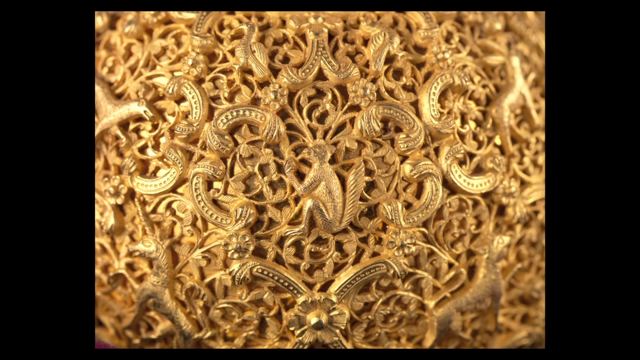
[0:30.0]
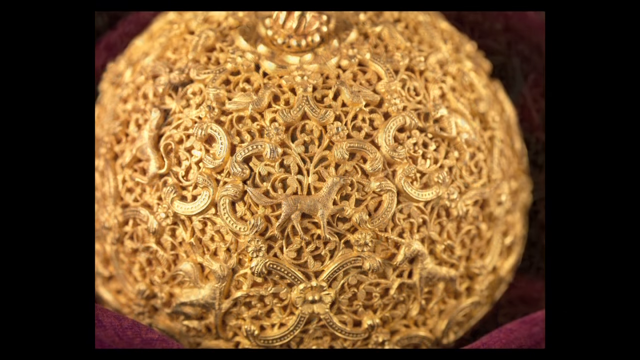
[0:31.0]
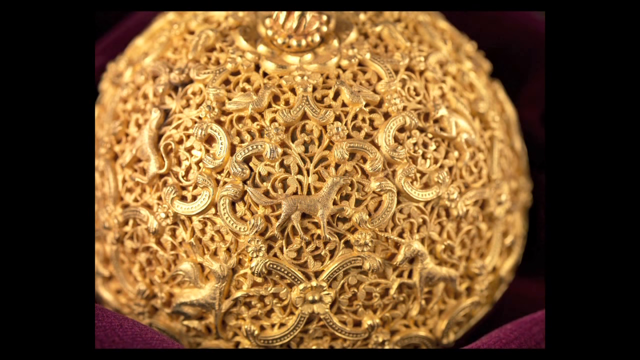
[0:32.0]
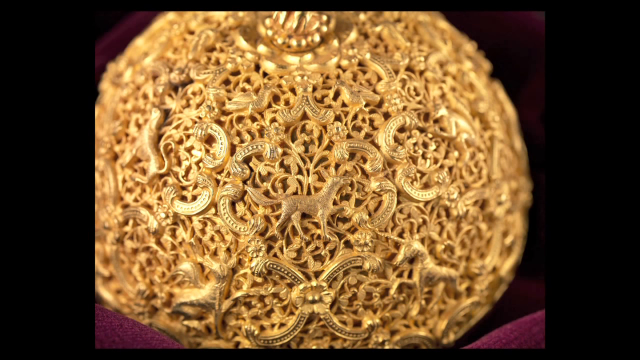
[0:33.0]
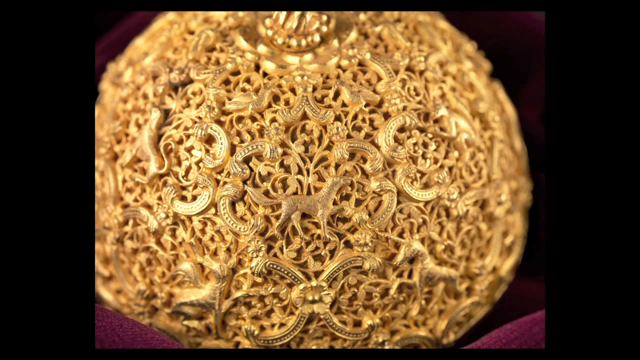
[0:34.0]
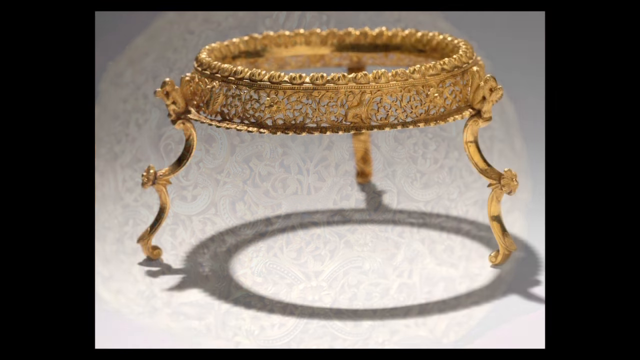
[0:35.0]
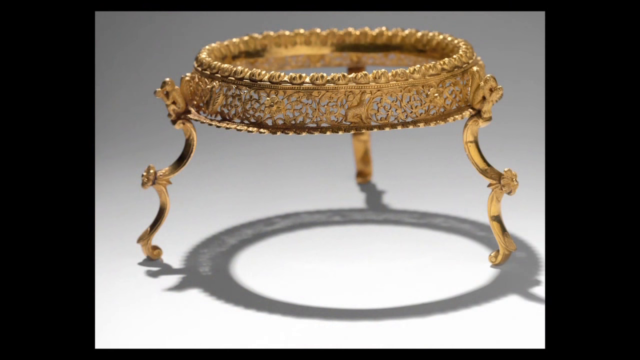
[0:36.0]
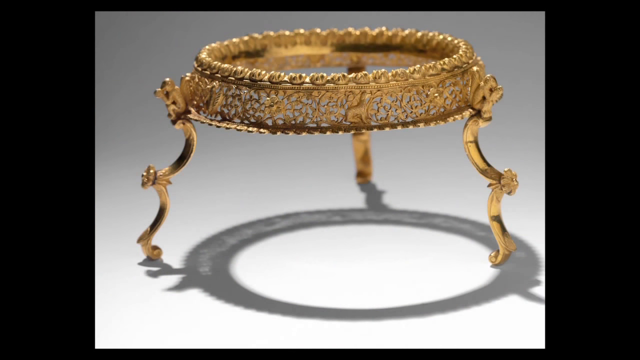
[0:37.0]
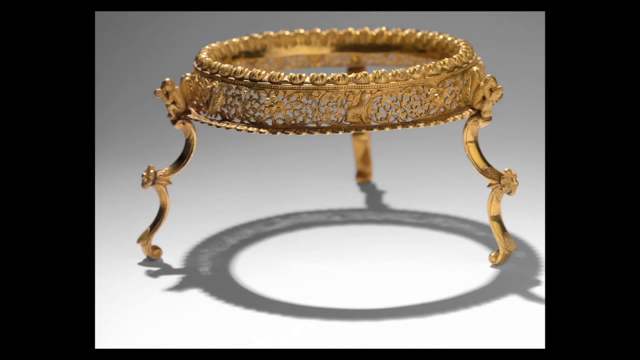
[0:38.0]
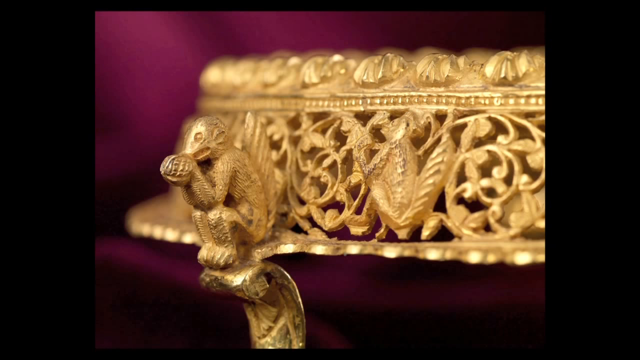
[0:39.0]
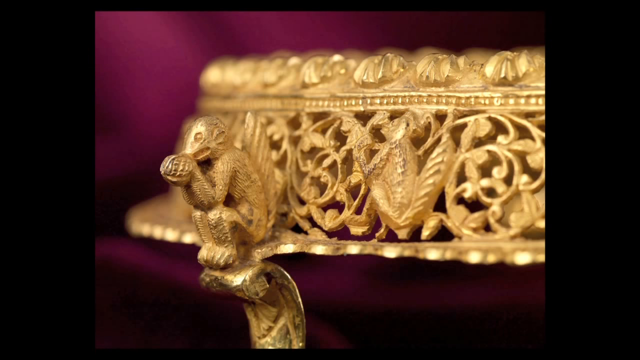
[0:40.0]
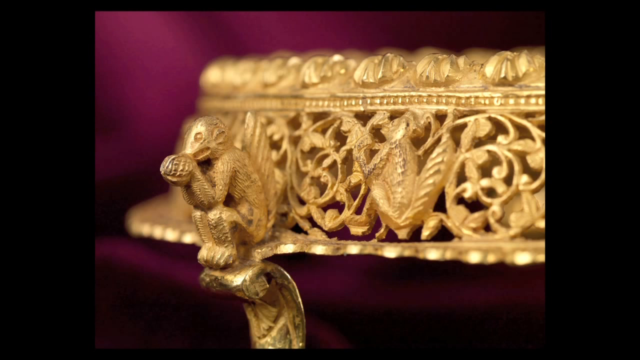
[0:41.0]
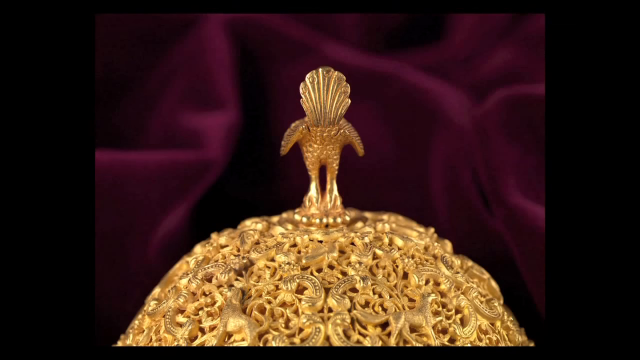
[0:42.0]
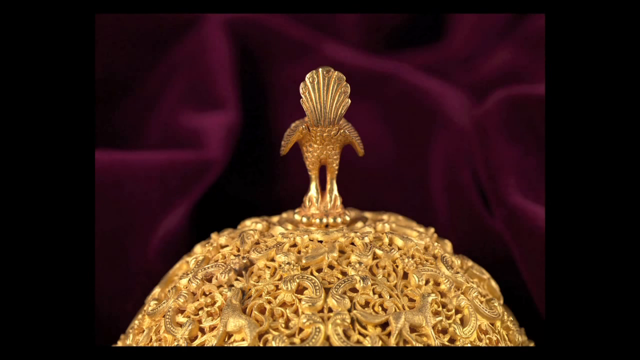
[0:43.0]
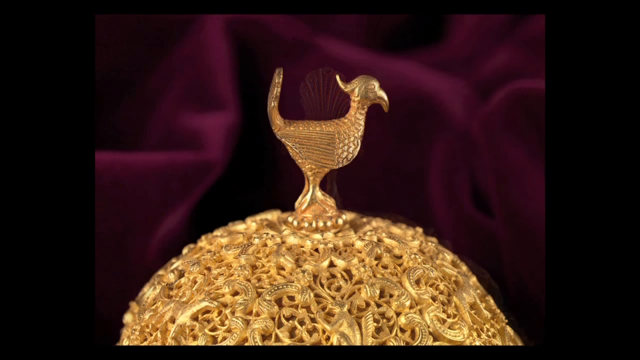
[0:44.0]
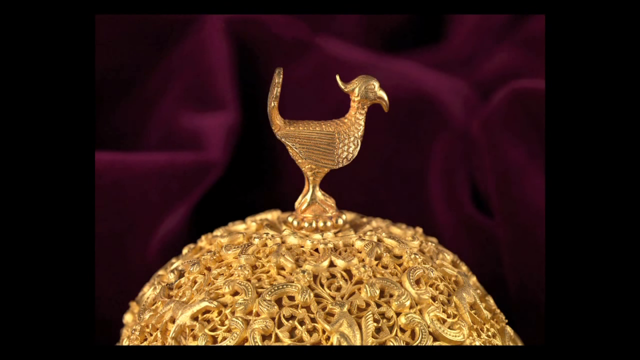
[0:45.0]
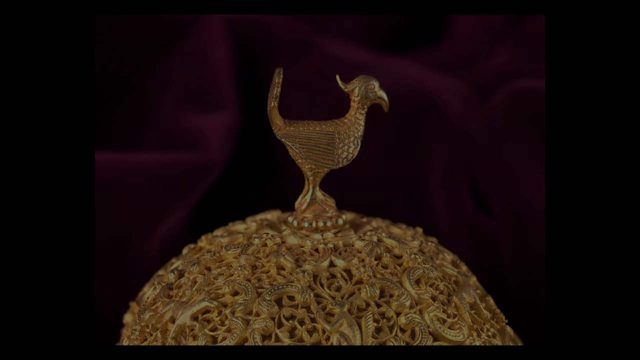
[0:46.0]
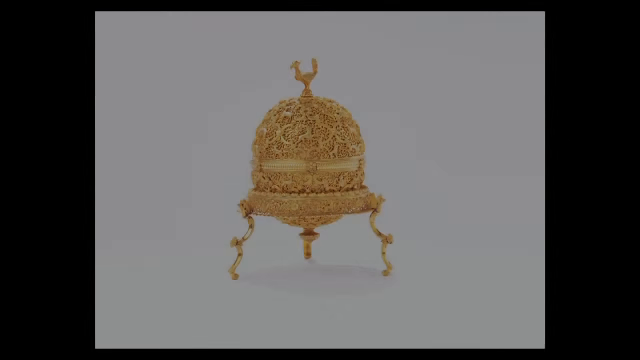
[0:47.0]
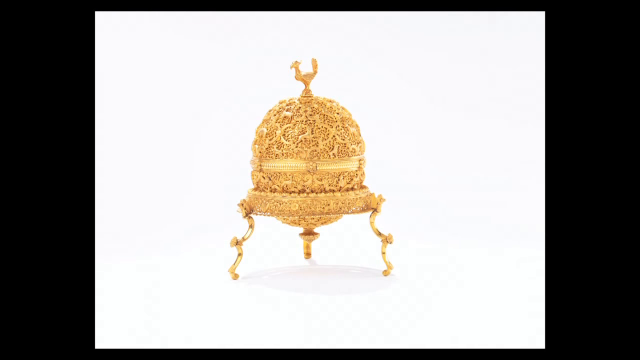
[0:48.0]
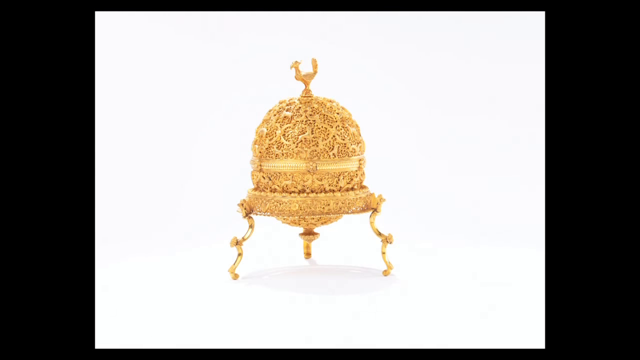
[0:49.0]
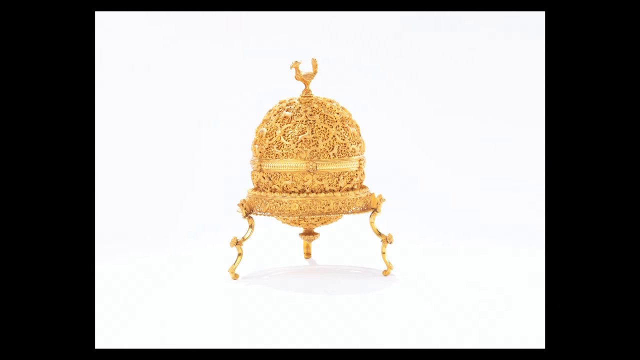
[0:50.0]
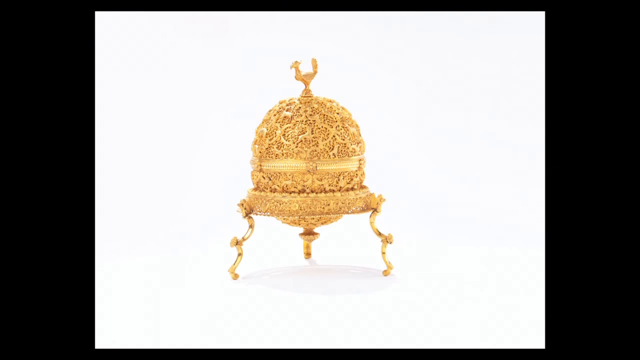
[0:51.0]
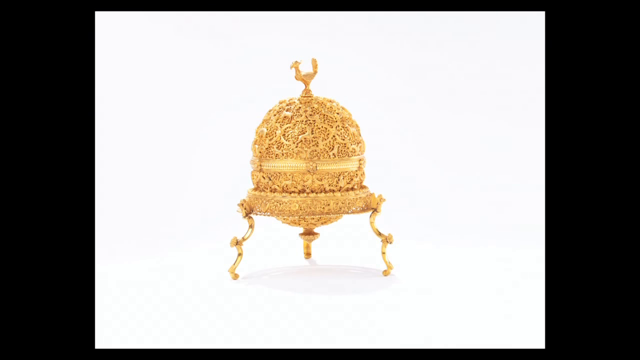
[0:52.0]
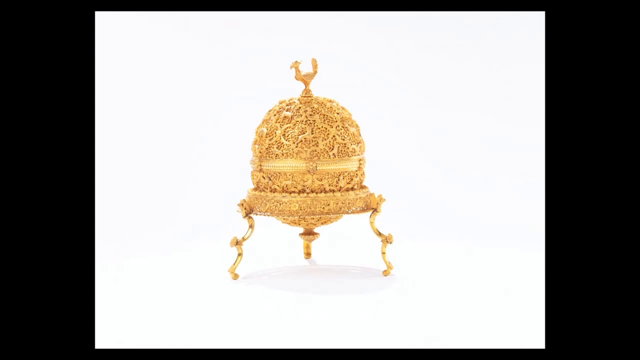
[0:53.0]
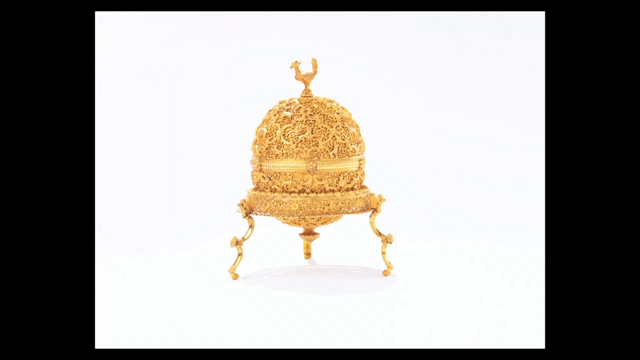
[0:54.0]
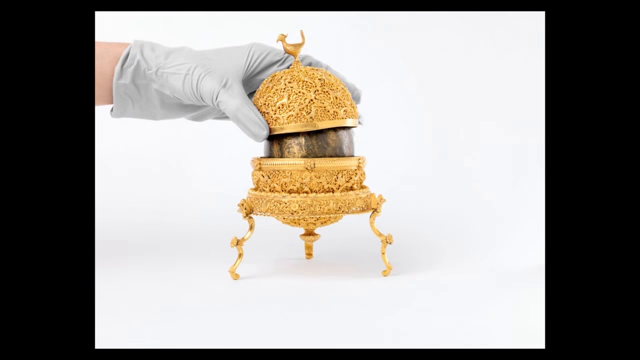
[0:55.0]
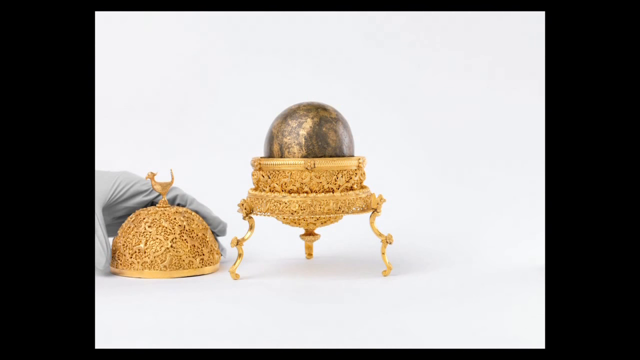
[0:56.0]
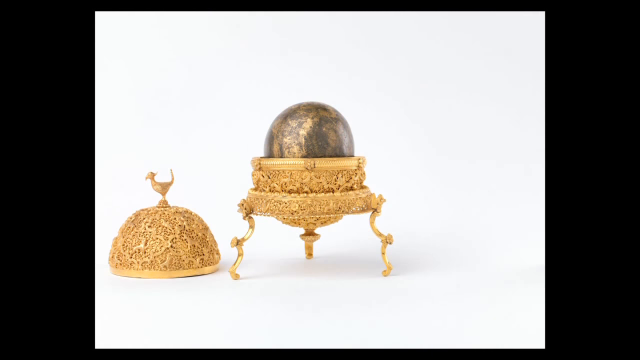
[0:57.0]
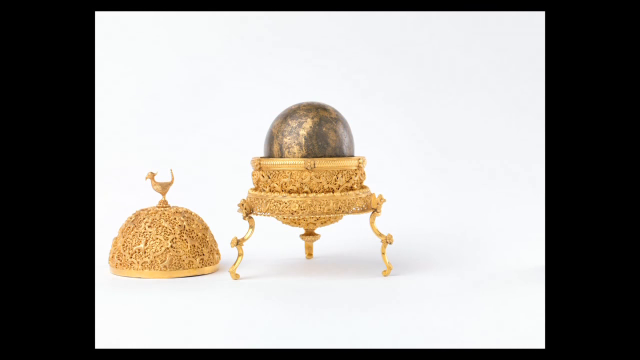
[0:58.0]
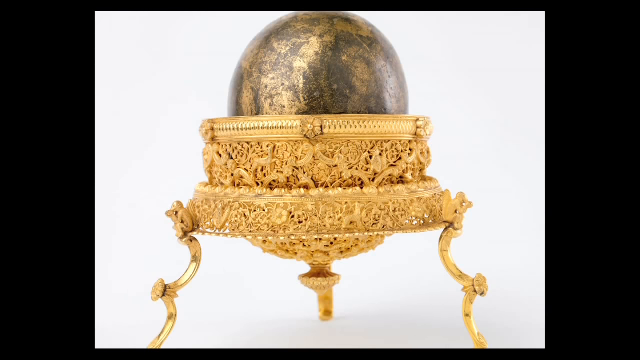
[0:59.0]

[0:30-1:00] A golden type of box is shown. There is a button where it opens up, and three small legs at the bottom hold it up. At the top, a bird is standing, sort of like an ornament. The box is standing on a maroon, silky type of blanket. More details are shown: various animals, such as monkeys, cats, giraffes, birds and dogs, are embedded in it. In one part, only the bottom piece of the jewel is visible; it has three legs and appears to be very heavy as it stands on a wide surface. Another close-up then shows something inside it, though it is unclear what it is.